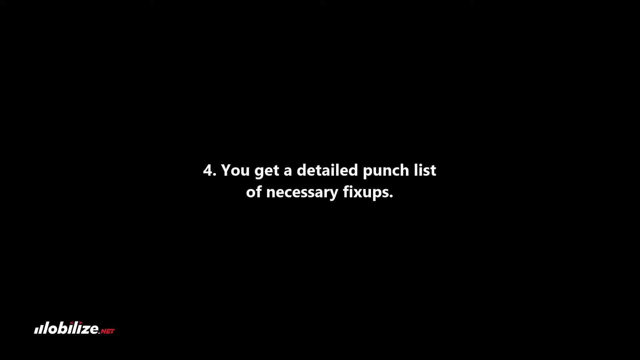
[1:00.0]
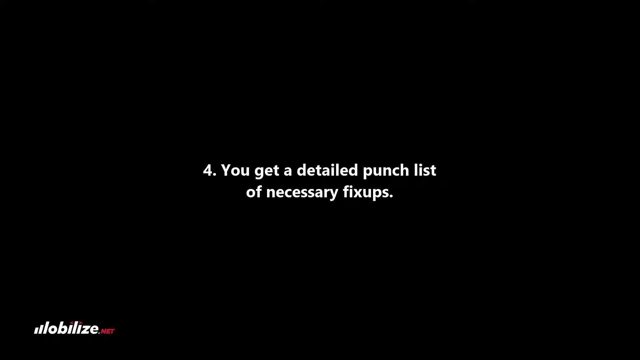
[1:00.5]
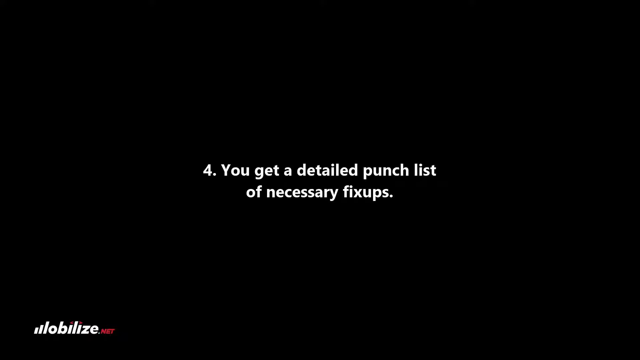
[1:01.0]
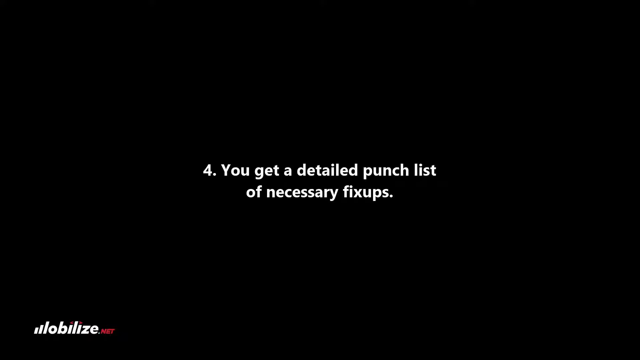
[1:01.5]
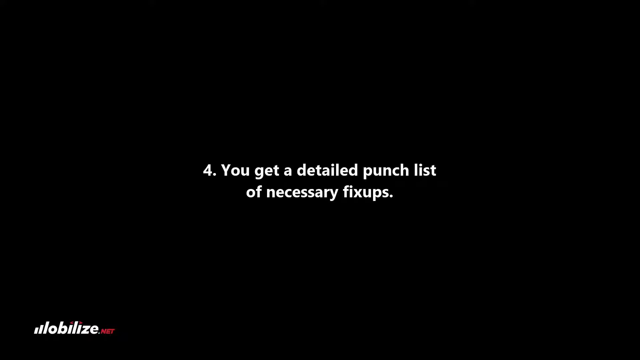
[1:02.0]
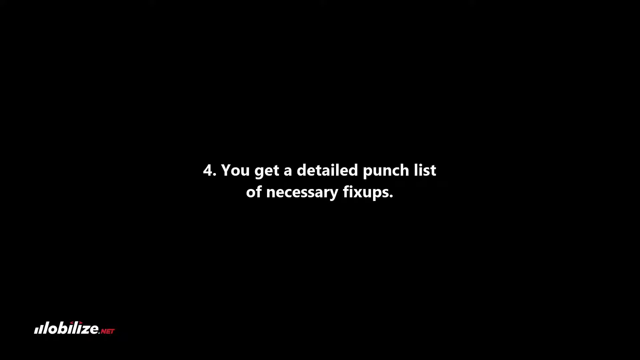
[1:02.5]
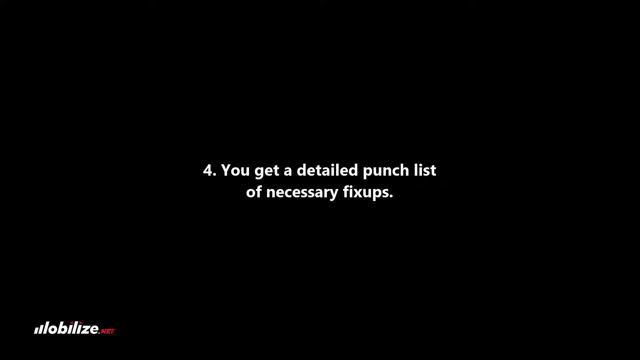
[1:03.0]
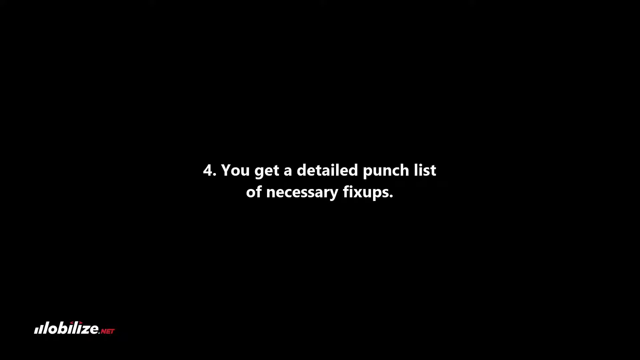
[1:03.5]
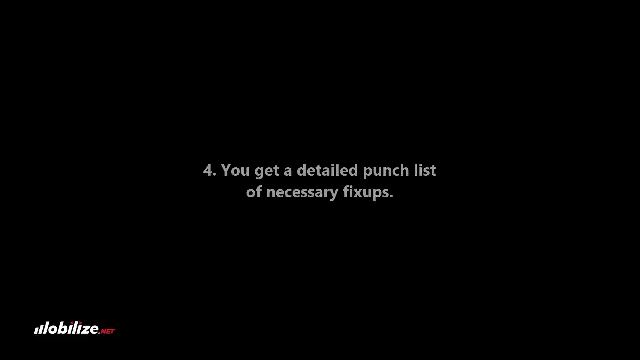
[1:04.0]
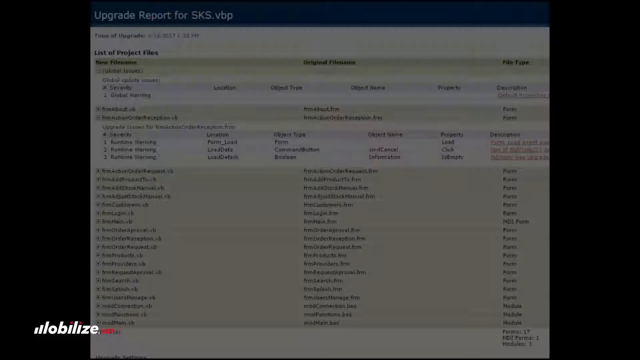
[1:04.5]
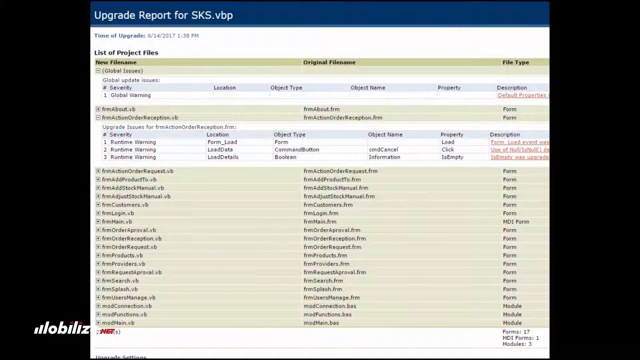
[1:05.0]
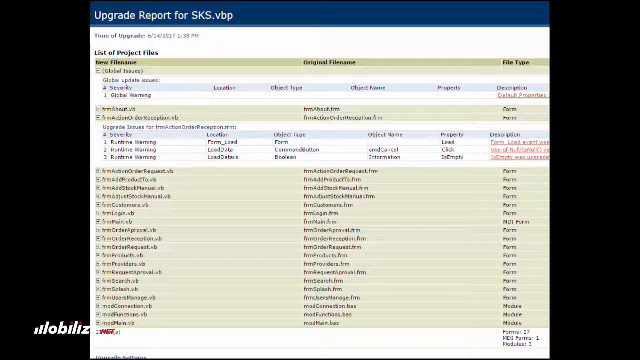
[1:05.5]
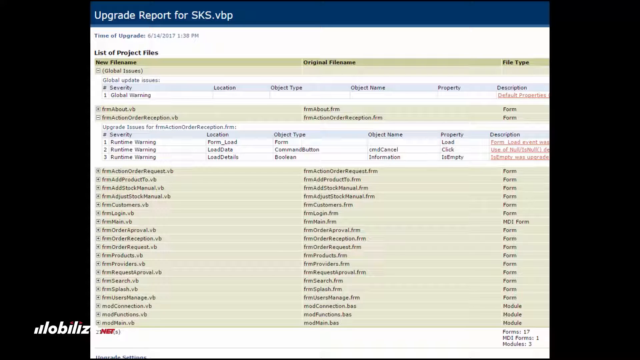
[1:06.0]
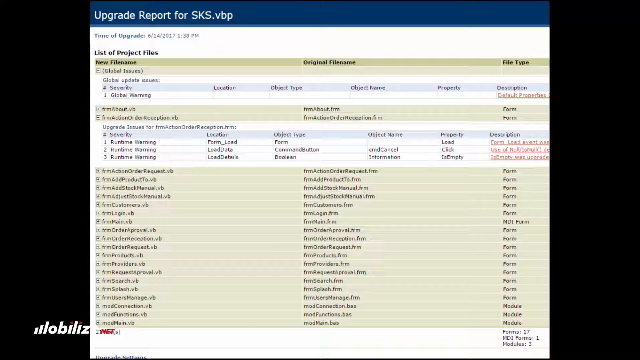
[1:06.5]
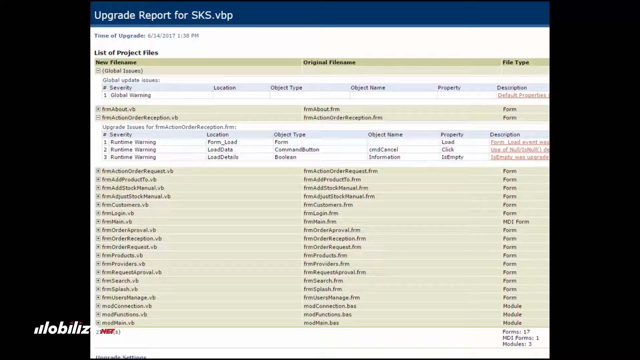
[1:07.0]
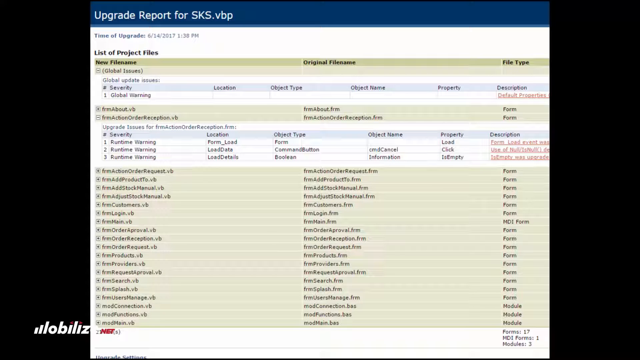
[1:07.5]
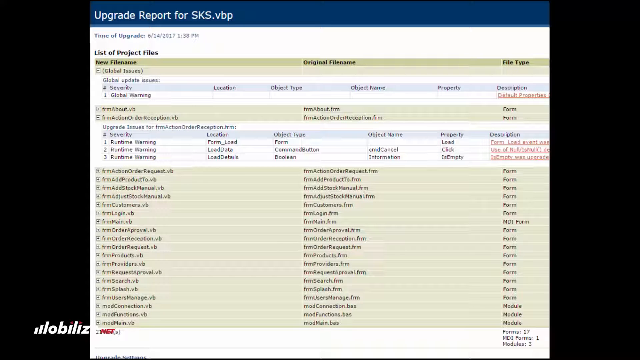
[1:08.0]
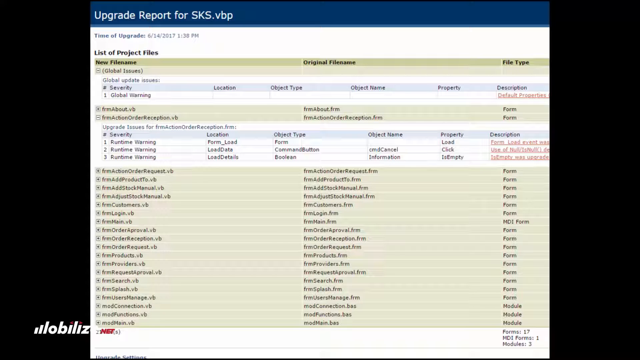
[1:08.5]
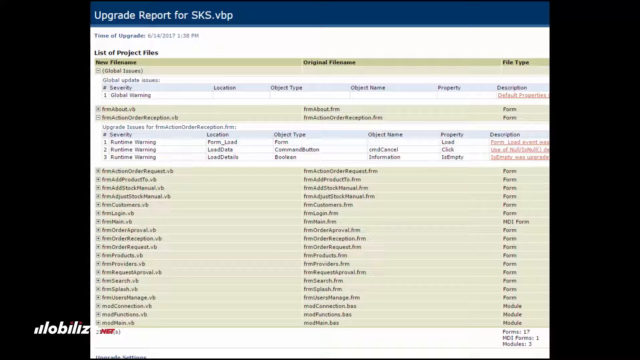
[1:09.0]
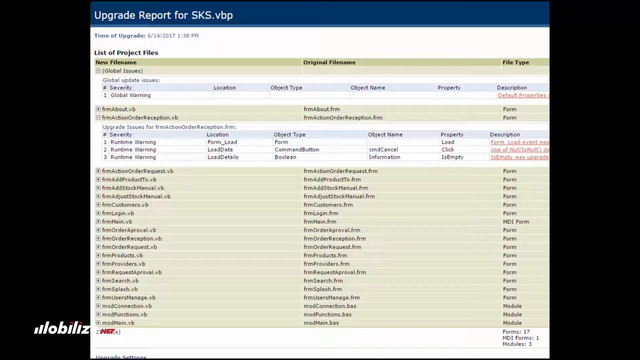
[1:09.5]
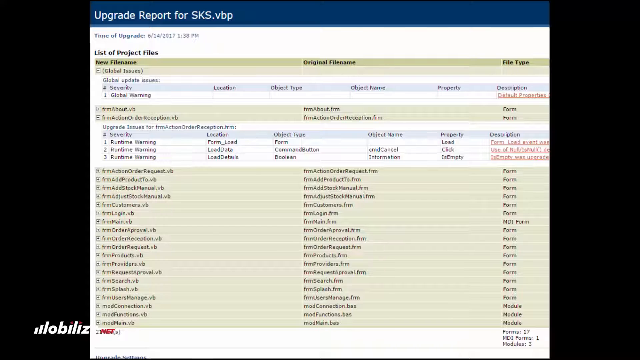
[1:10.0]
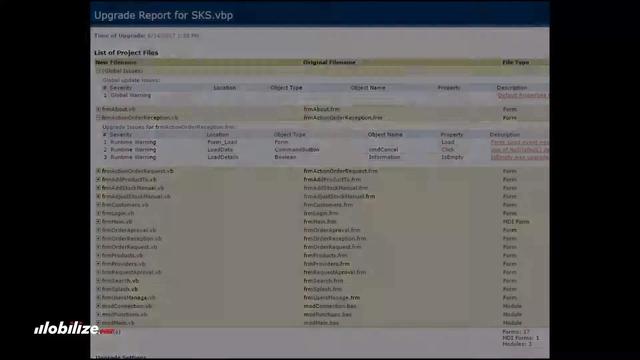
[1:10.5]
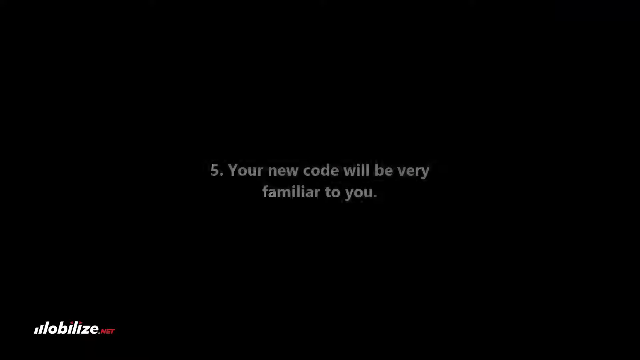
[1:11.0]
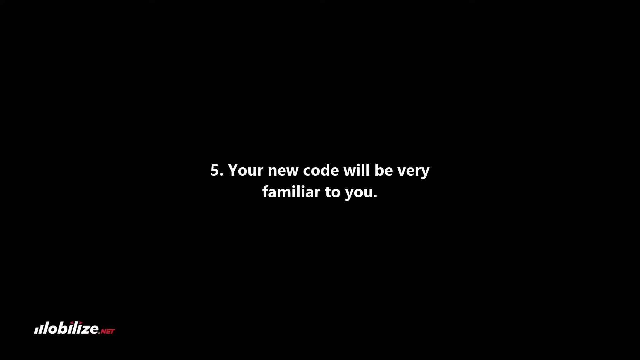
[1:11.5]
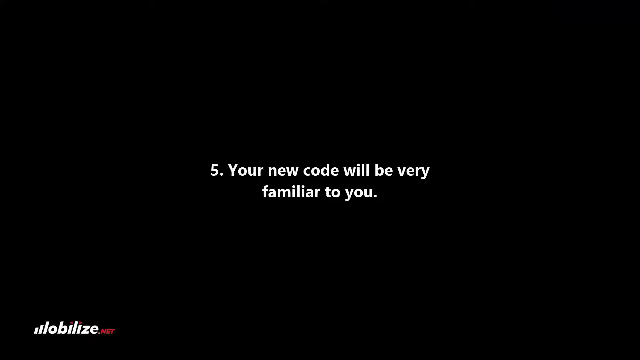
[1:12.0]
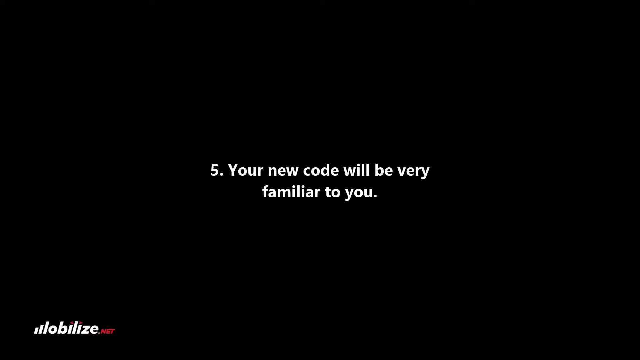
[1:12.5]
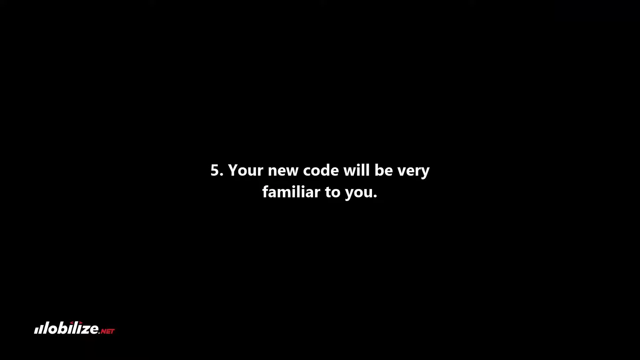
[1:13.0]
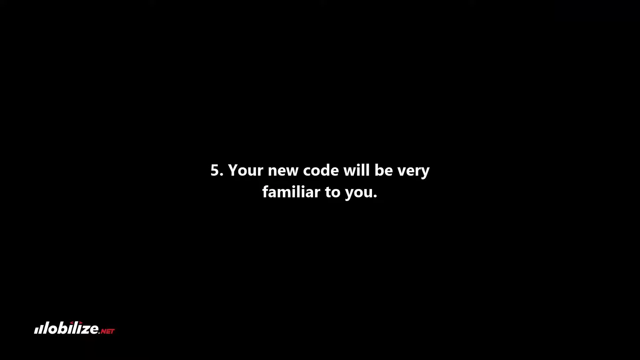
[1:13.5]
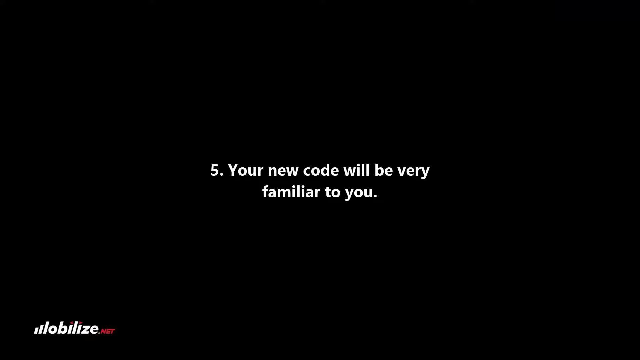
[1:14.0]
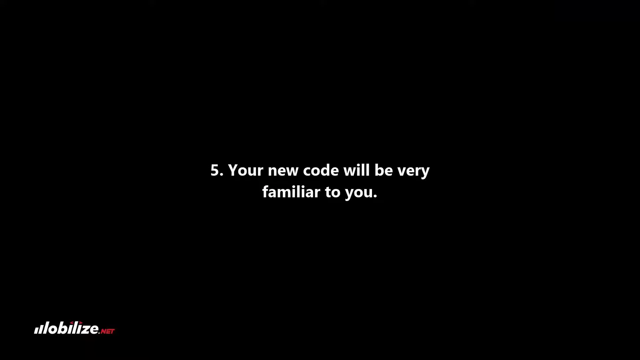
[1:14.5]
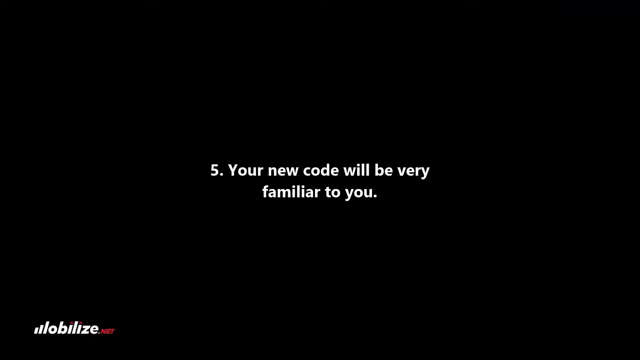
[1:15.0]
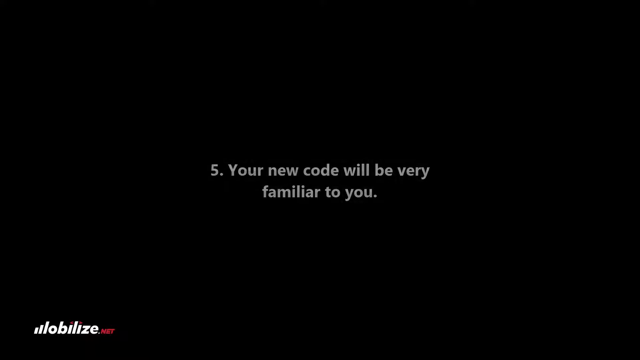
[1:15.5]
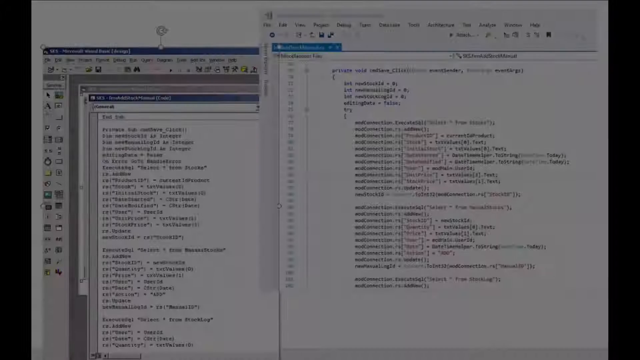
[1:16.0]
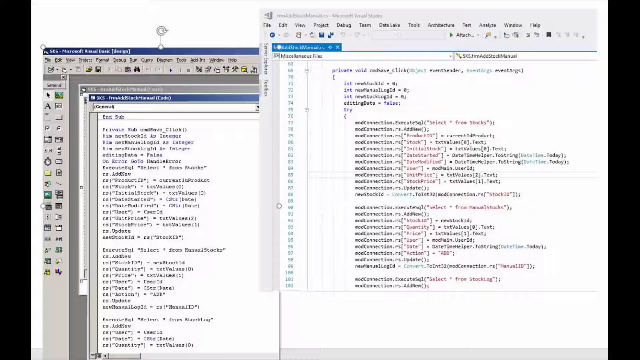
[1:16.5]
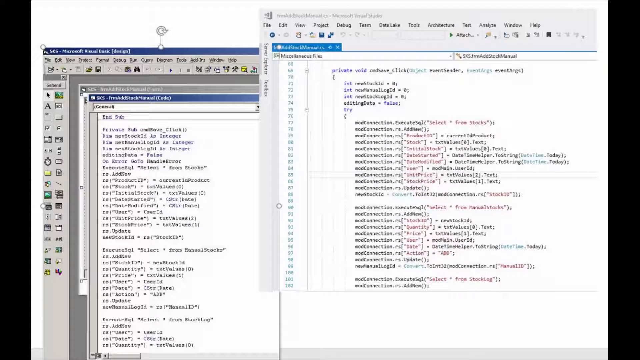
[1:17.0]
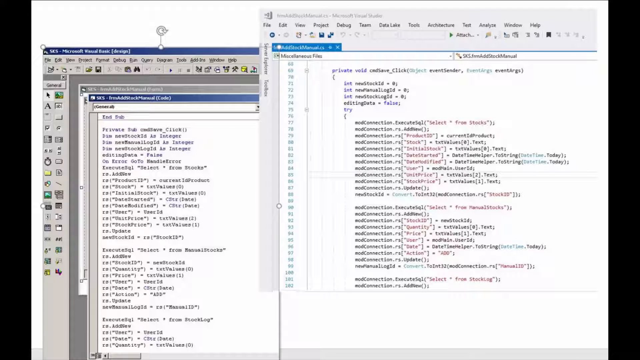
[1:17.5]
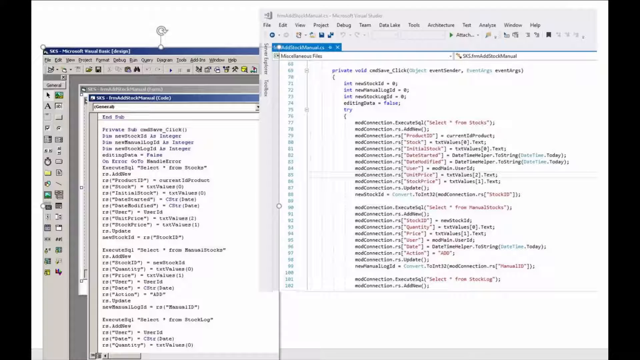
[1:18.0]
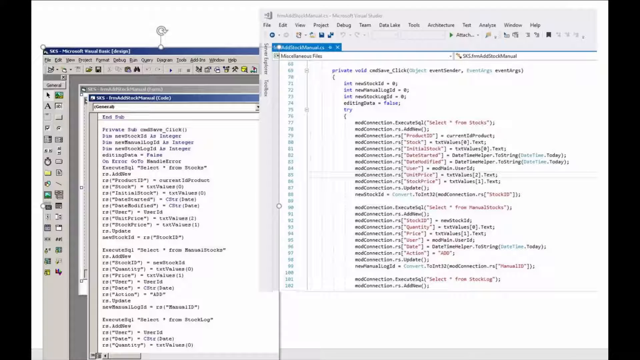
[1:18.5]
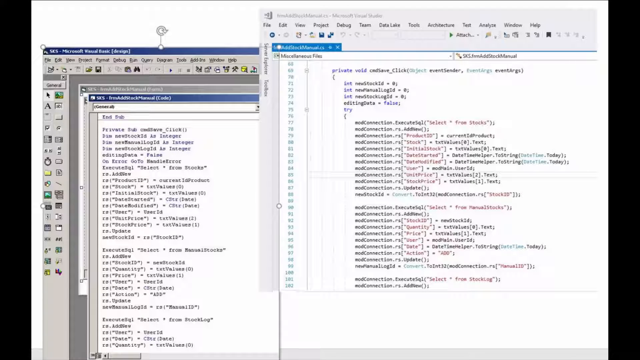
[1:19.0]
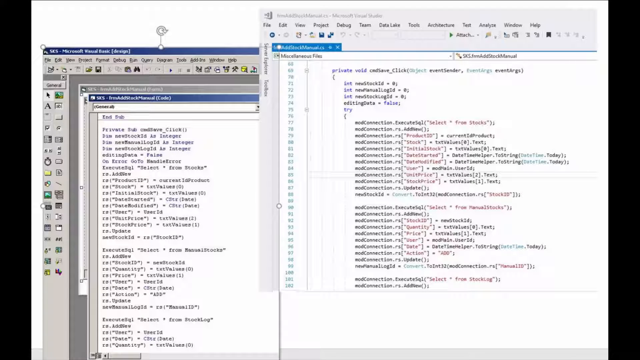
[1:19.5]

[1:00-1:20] Bullet point number 4 reads "you get a detailed punch list of necessary fix-ups," in white Arial text in the center of the screen. The text fades out and an image fades in, titled "Upgrade Report for SKSVBP," showing a list of files. After a few seconds it fades back to the solid black screen, where new text appears for number 5: "Your new code will be very familiar to you," also white, in Arial, in the center of the screen. This holds for a few seconds before fading back to black, and another image fades in that appears to be a window of code. It stays for a few seconds, then cuts to the black screen.